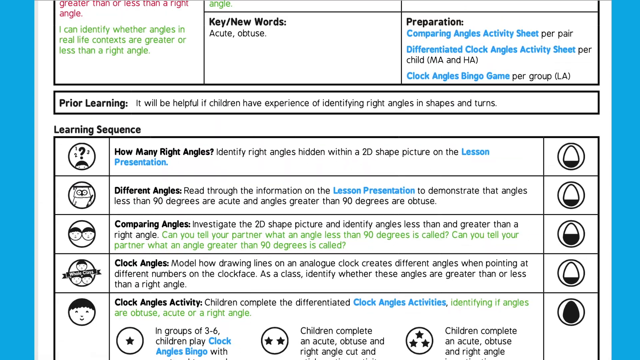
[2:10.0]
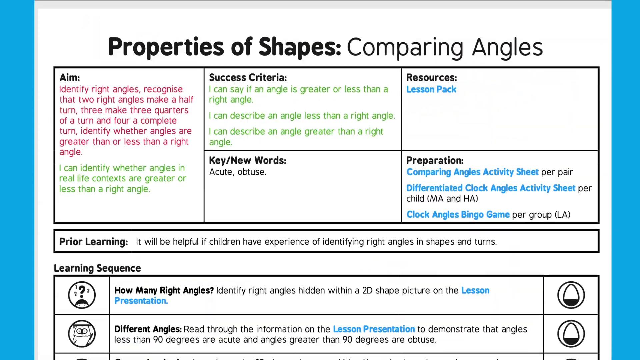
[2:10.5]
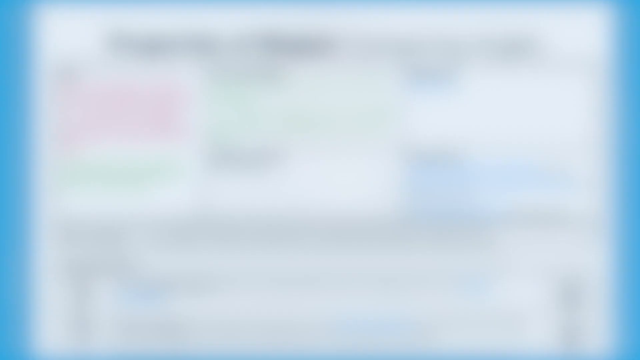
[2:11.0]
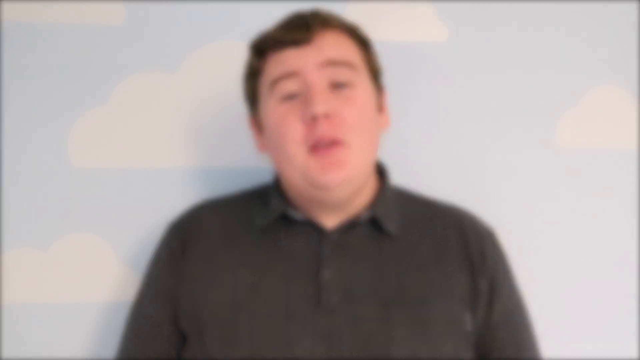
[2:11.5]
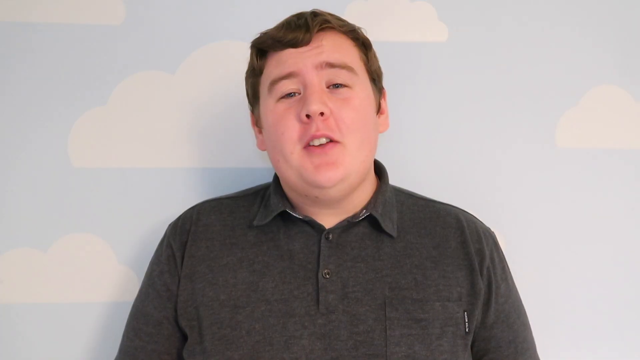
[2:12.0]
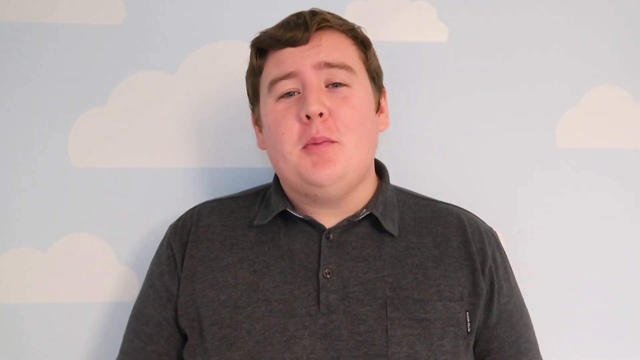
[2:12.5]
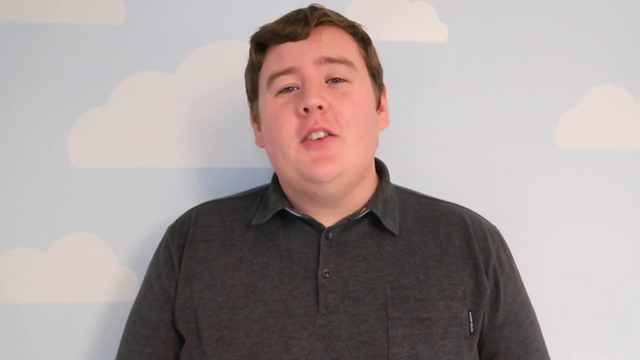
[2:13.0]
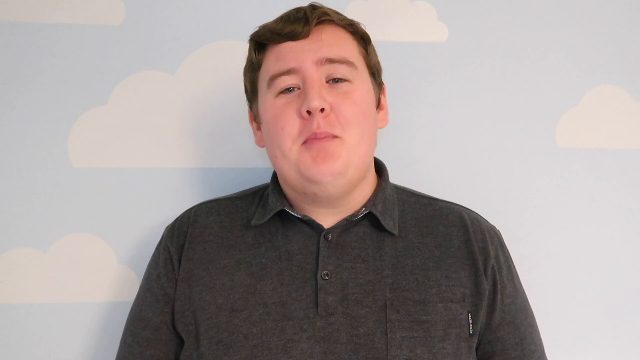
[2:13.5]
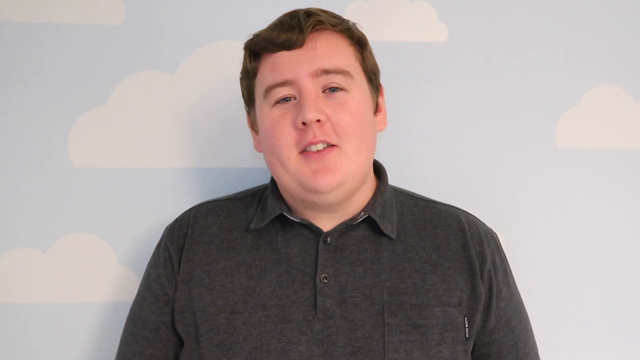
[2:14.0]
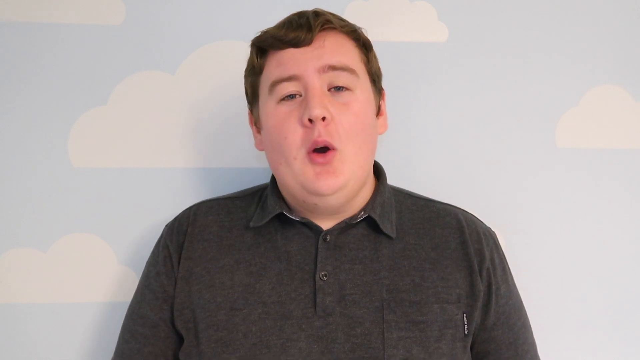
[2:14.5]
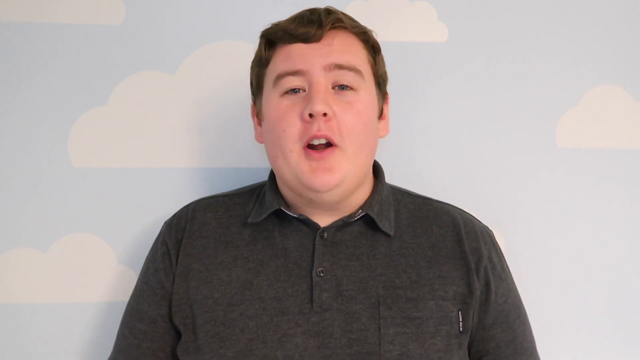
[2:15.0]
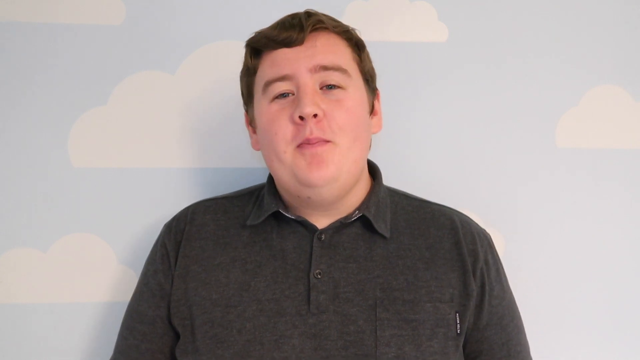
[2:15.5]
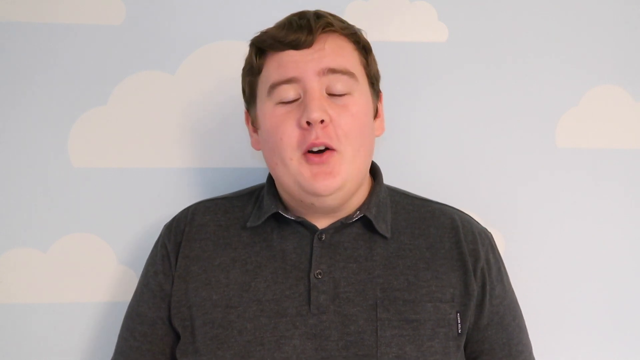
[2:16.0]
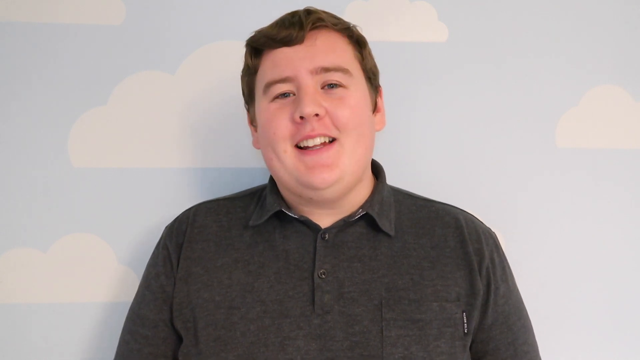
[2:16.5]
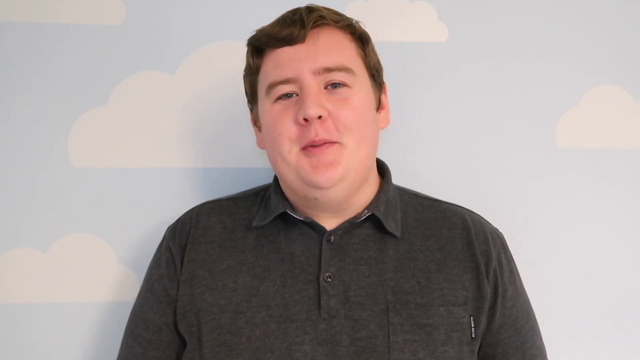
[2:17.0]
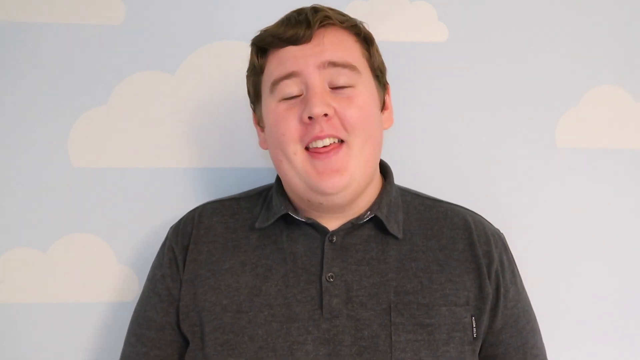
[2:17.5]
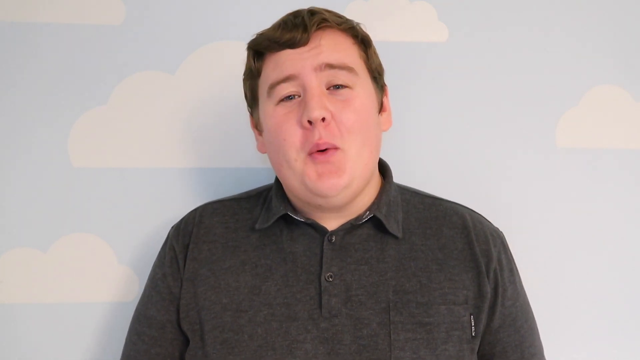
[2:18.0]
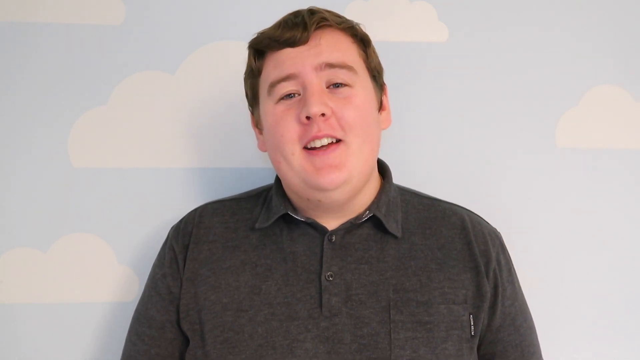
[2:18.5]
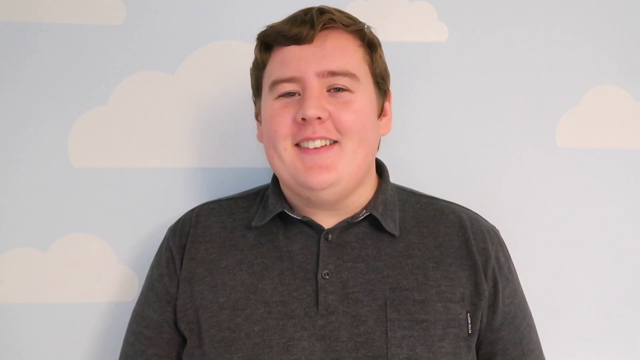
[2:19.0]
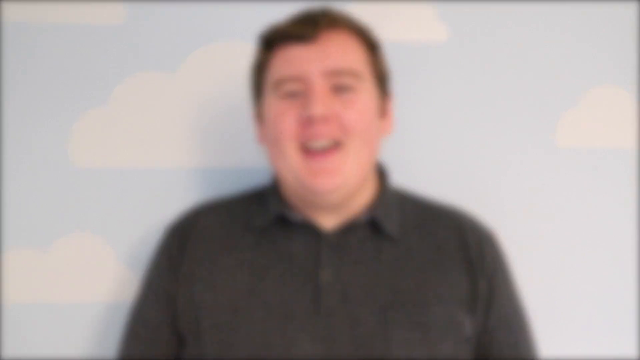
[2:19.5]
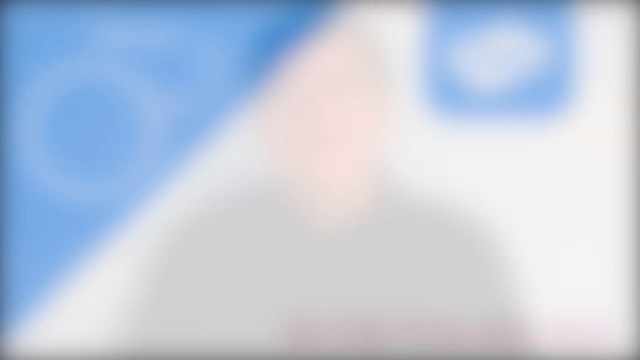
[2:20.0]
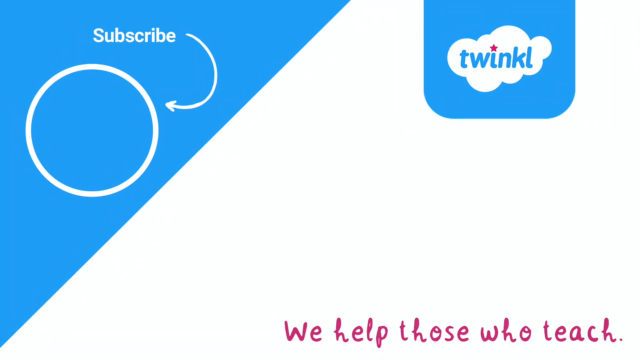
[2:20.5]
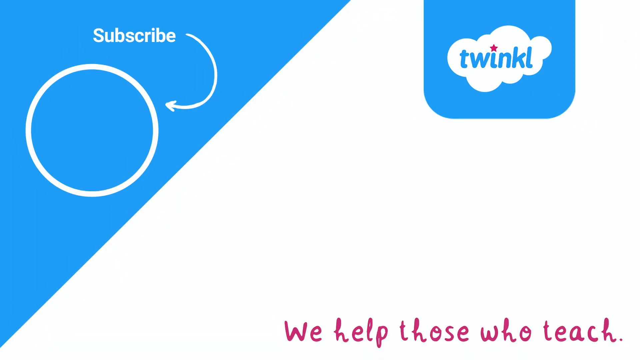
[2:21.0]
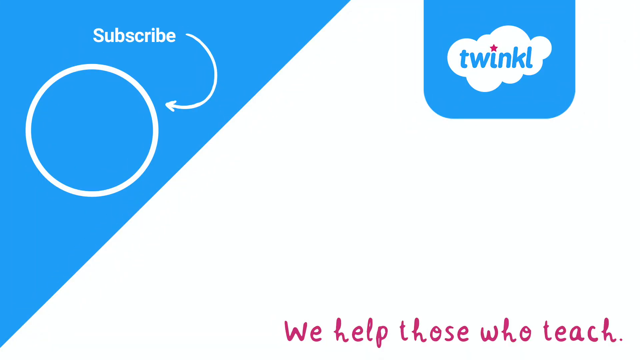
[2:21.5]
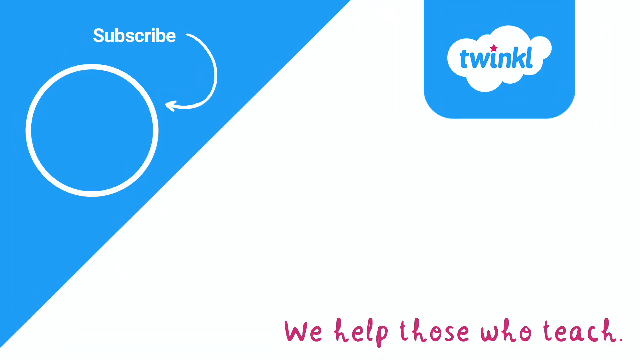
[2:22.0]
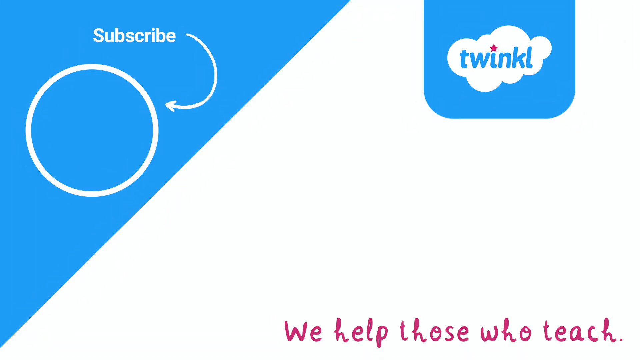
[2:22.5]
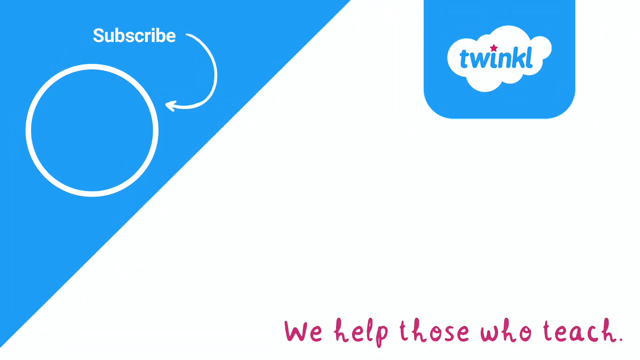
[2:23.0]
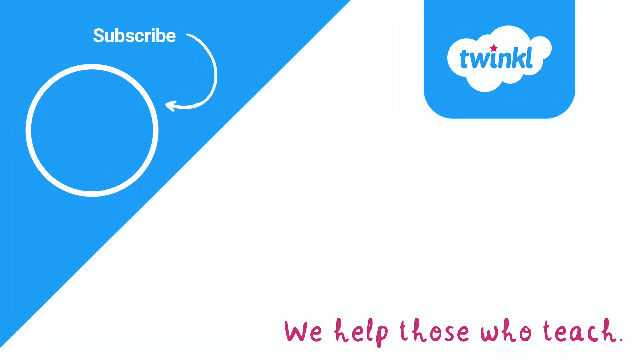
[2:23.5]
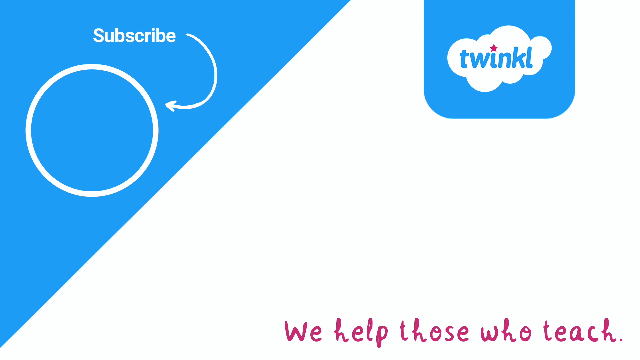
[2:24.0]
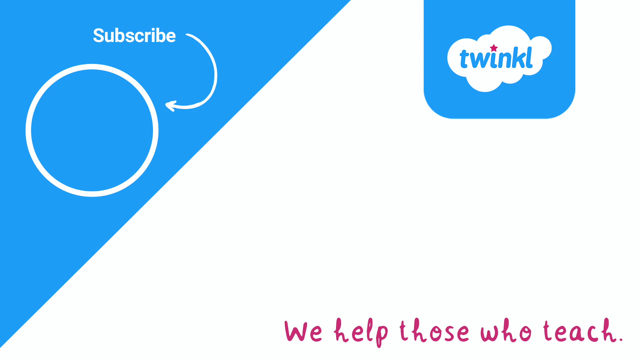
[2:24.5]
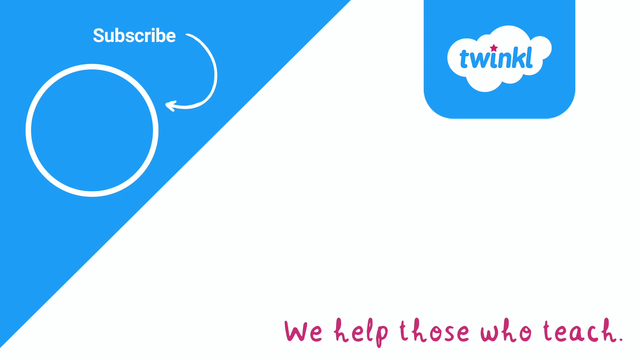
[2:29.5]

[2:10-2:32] The man appears again, wearing a grey top. "Twinkle" is shown in a circle inside a cloud-shaped border with a star, along with a slogan that reads something like "we help those who help". The screen has blue, green and black colours and shows the lesson sequence: first, how many right angles; second, different angles; third, comparing angles; fourth, clock angles; and fifth, clock angles activities. The first step involves identifying right angles hidden in 2D shape pictures on the lesson presentation, and the second involves reading information on the lesson presentation demonstrating that angles less than 90 degrees are acute and angles greater than 90 are obtuse.